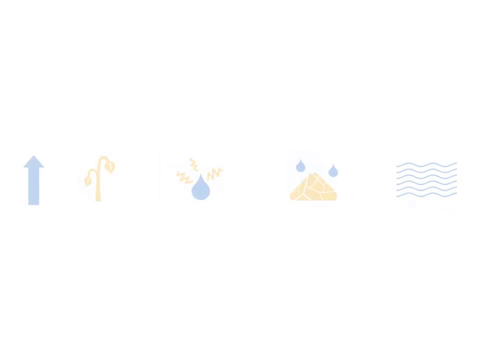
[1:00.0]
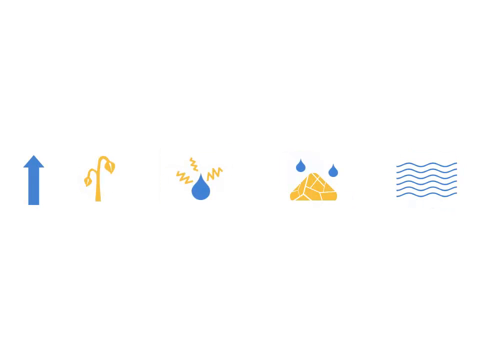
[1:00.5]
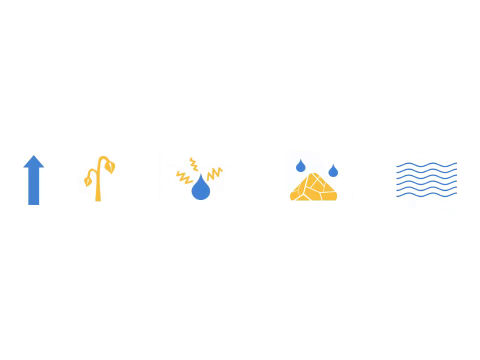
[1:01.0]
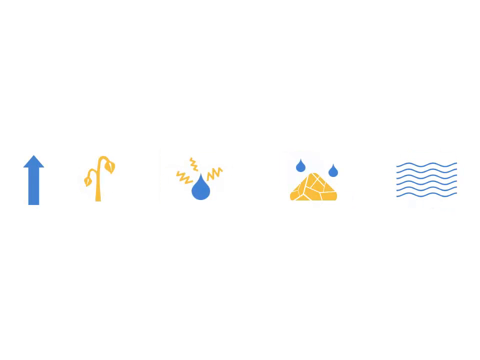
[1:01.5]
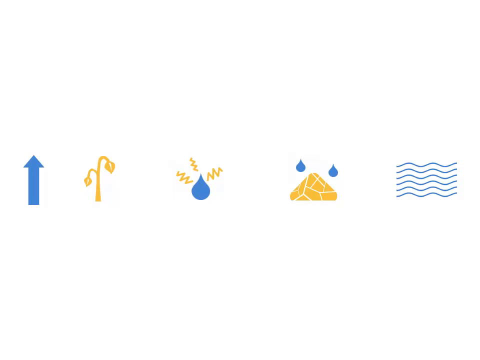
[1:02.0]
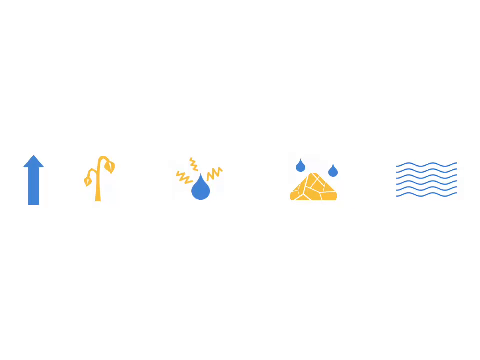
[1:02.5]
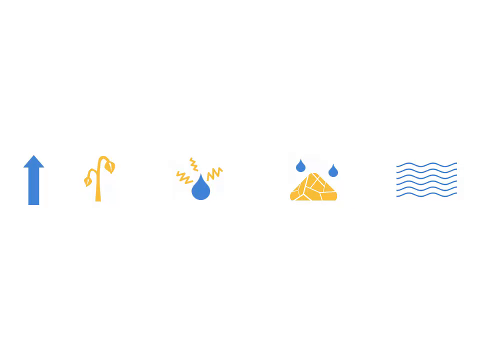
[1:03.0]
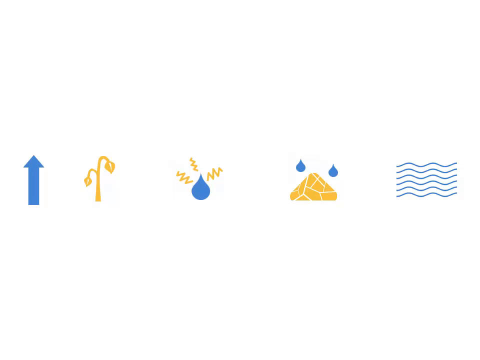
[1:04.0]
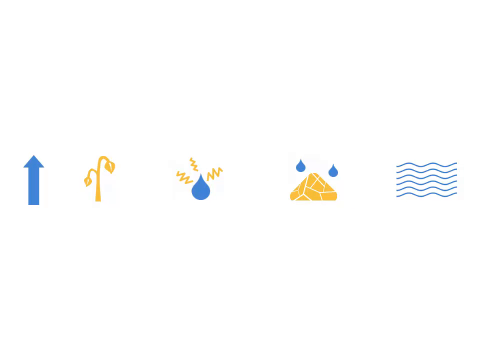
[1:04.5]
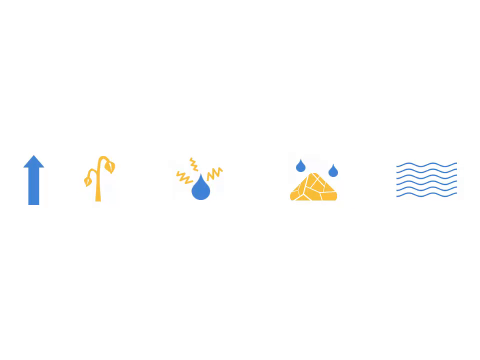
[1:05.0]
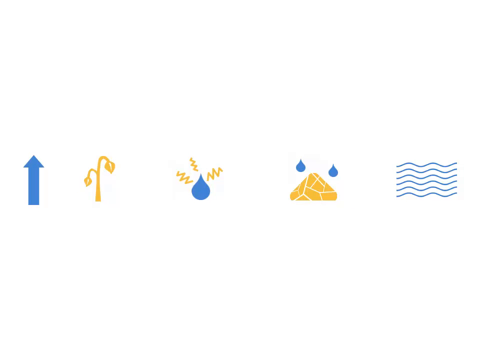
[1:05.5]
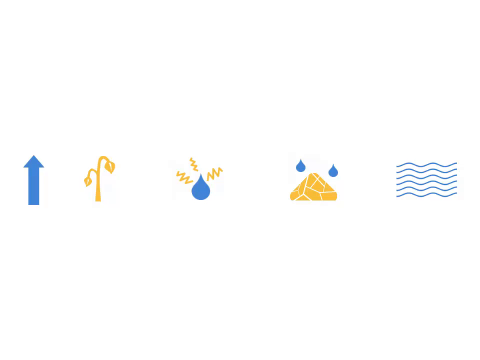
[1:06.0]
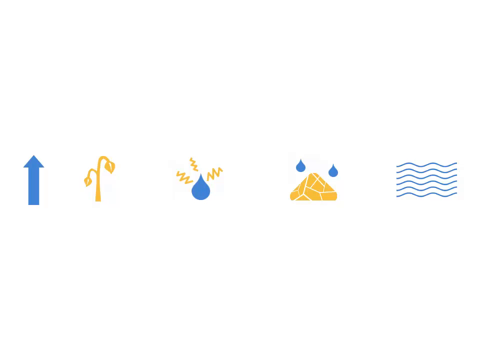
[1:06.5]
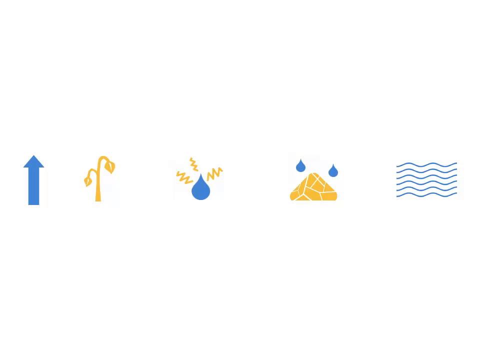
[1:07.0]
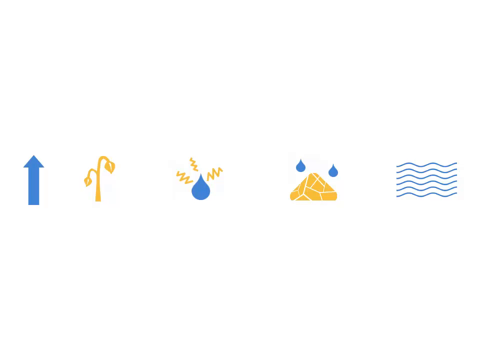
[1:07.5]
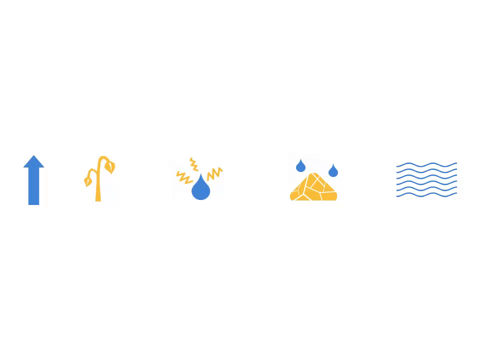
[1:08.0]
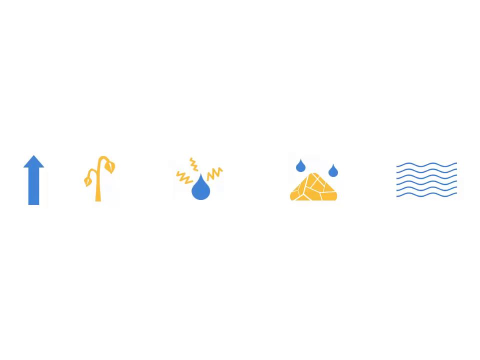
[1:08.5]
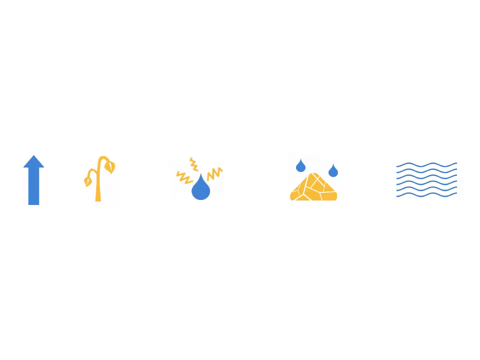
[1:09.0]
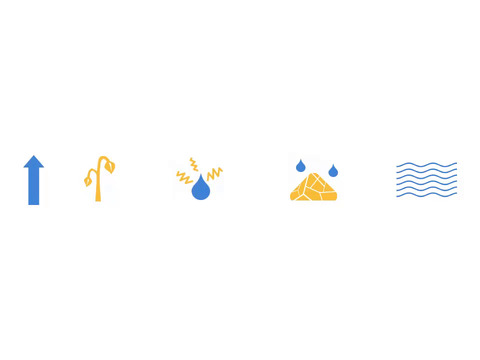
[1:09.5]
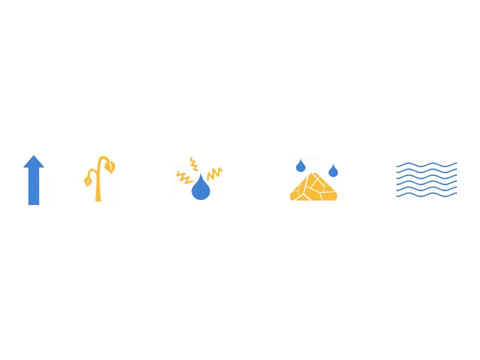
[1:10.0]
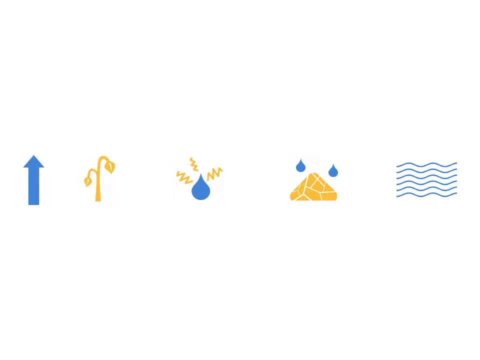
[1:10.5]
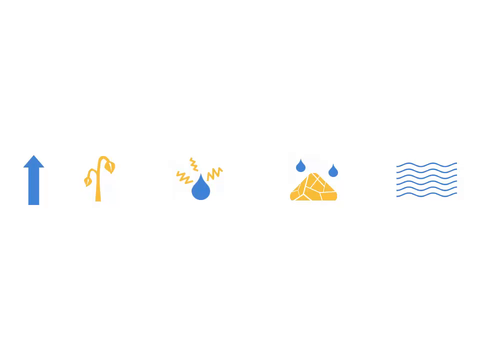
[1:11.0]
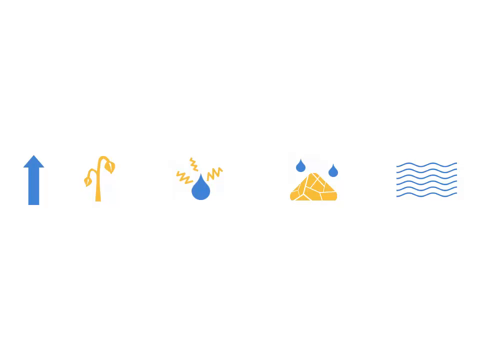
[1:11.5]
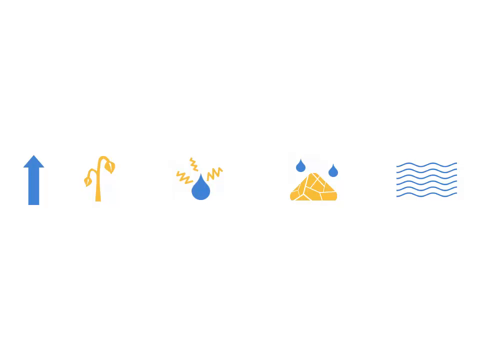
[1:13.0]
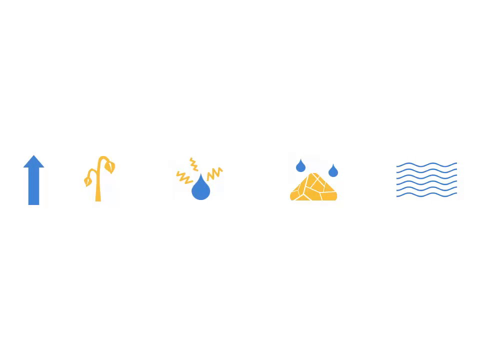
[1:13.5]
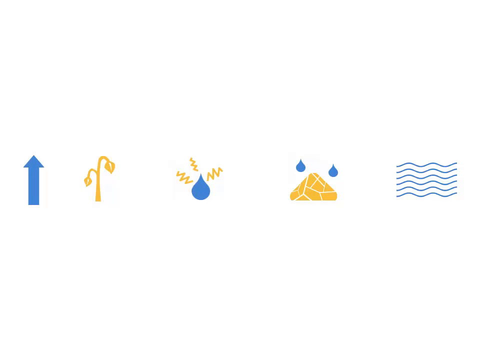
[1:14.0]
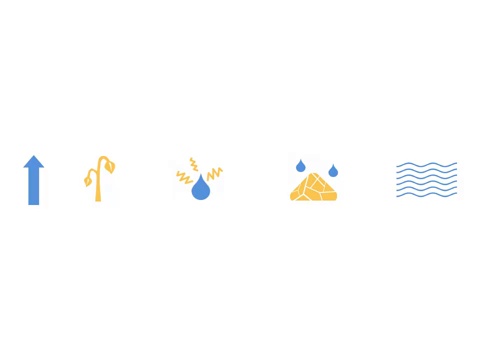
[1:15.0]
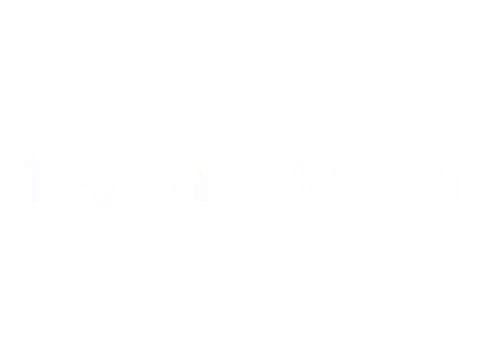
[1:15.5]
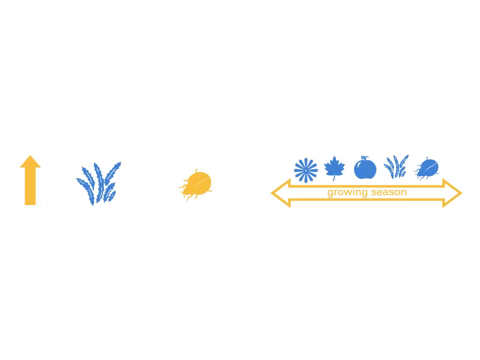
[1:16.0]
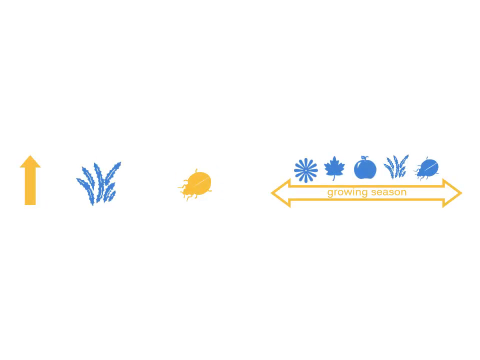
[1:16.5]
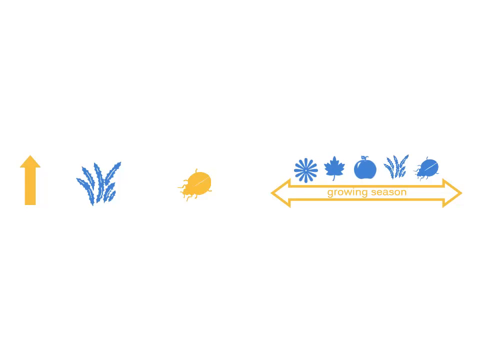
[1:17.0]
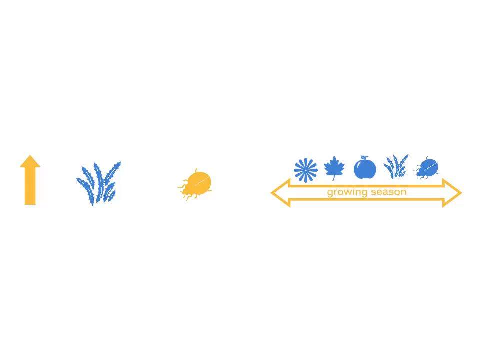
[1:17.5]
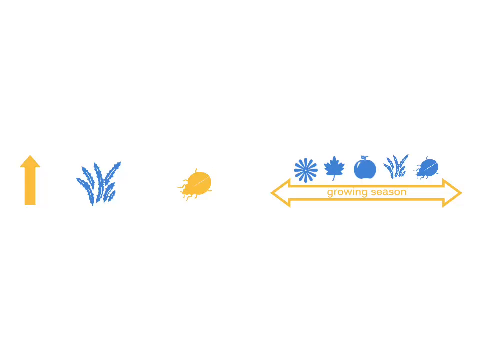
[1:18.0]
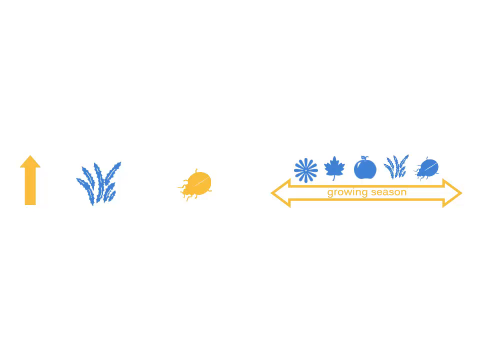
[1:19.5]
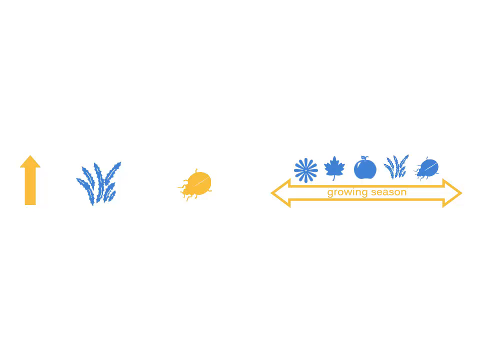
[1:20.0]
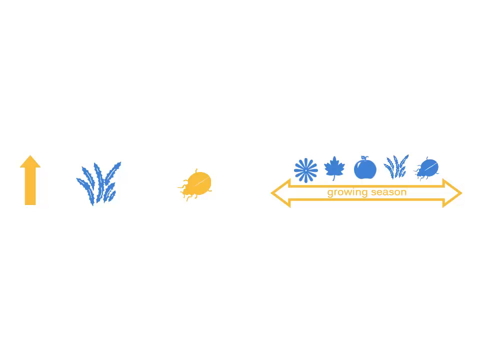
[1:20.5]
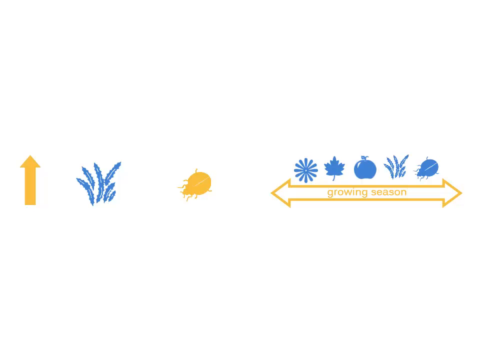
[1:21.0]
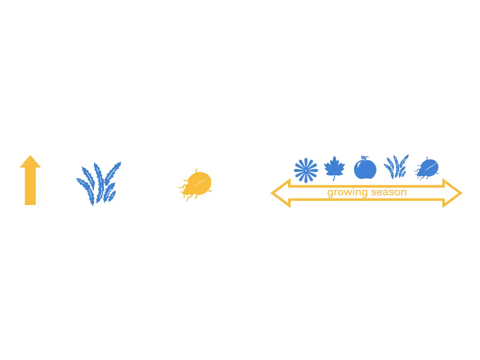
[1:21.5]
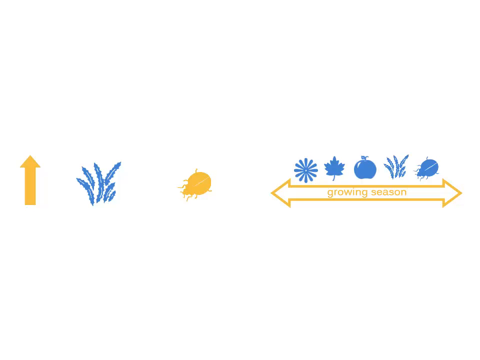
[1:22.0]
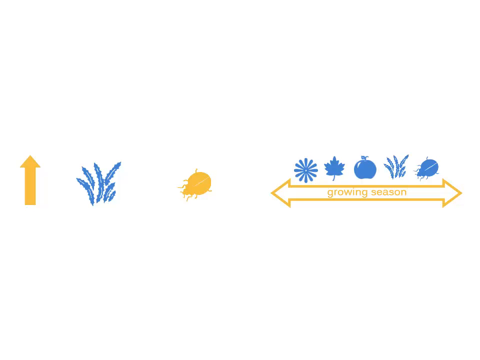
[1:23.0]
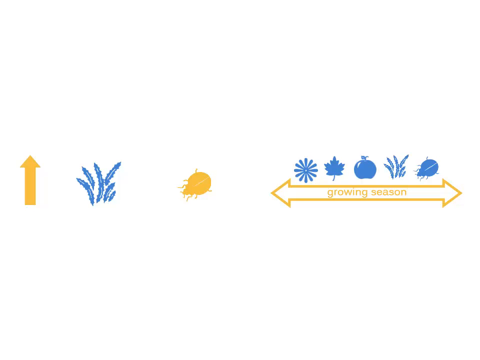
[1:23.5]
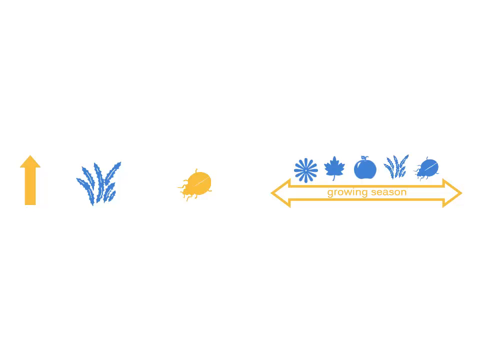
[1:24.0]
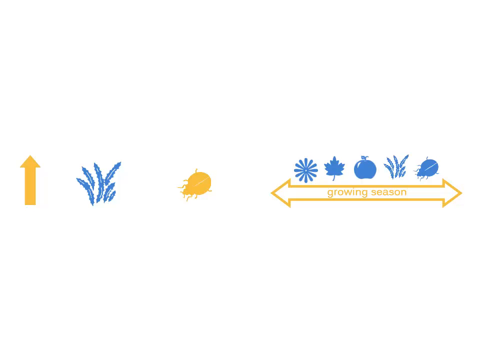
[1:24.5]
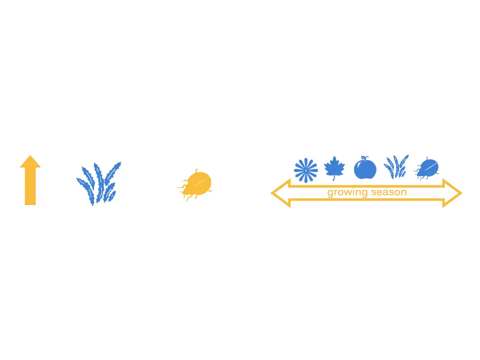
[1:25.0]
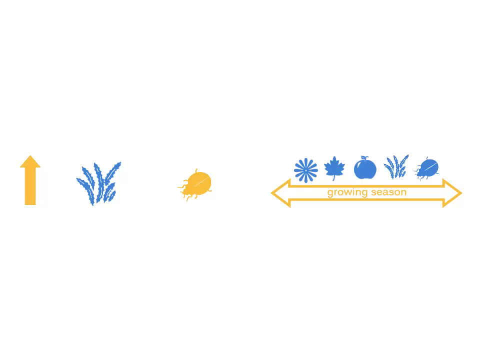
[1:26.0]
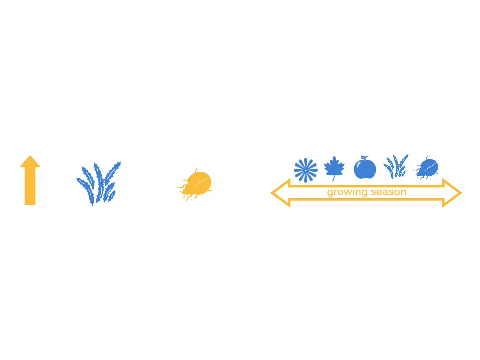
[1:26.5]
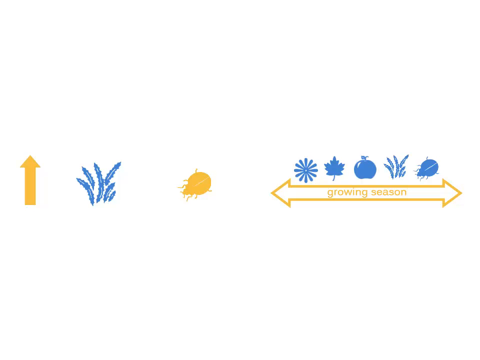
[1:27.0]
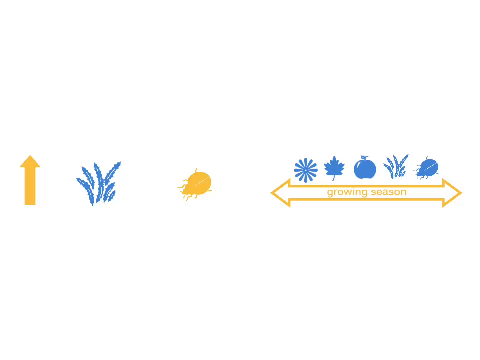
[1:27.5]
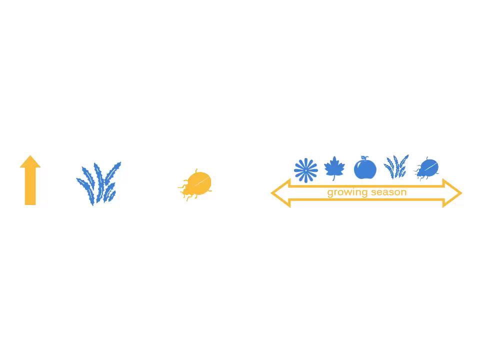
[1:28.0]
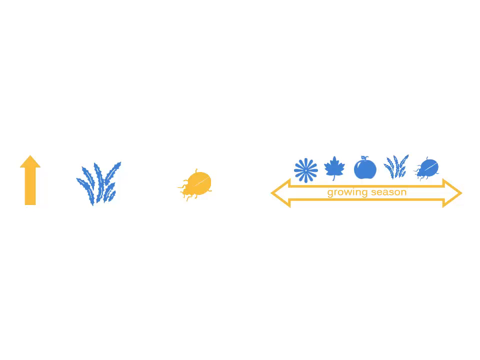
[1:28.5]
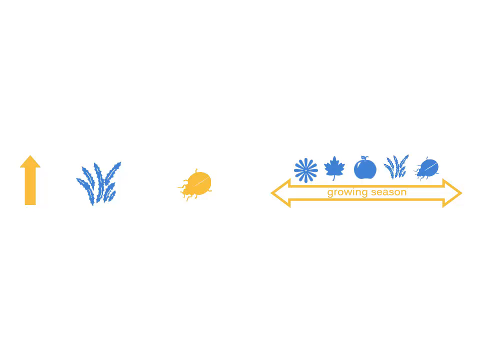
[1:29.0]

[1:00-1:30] A white background page shows a series of icons across the centre, left to right. On the far left is a blue upward-pointing arrow. To its right is an orange plant stem with leaf shoots coming from it, one to the left and one to the right. Next is a large blue raindrop with three spiky lines coming from its left, centre and right. To the right of this is a triangle-like shape made up of different segments, with white spaces in different polygon shapes between them; above the triangle are two orange raindrops, slightly smaller than the raindrop to the left, one to the right of the triangle and one to the left. The furthest right icon is a series of six blue wavy lines, one above the other. The page holds for some time and then changes to another white background with a row of icons across the centre. At the far left is an upward-pointing orange arrow, then spiky blue lines in a sort of bush shape, then an orange ladybird or beetle pointing down. To its right is a large outline of an arrow with points at both left and right, its orange outline around a white centre containing the words "growing season" in orange. Above this arrow are five symbols: the first looks like a blue flower, the second like a blue maple leaf, the third like a blue apple, the fourth like a spiky bush, and the fifth is the ladybird beetle in blue. The page stays on this for some time.